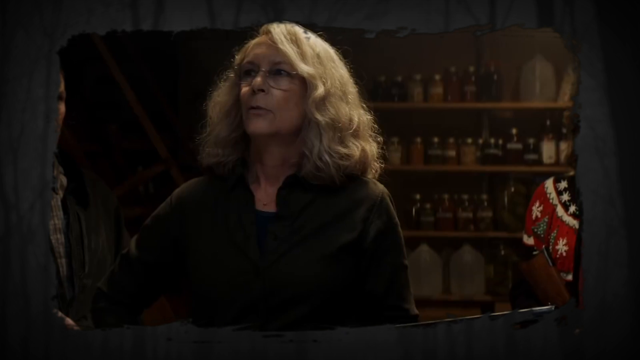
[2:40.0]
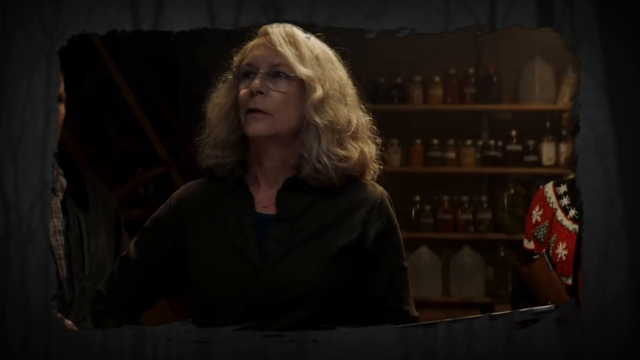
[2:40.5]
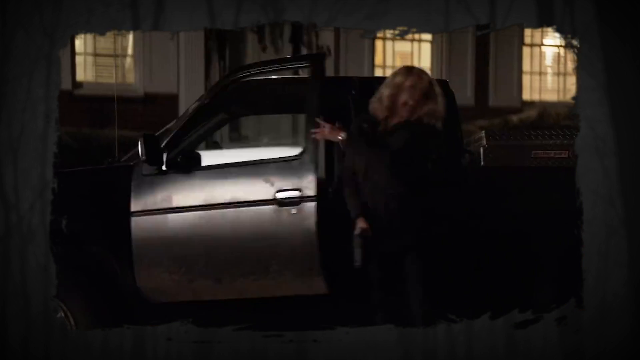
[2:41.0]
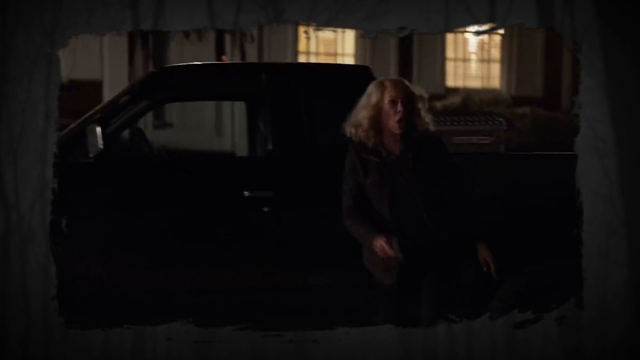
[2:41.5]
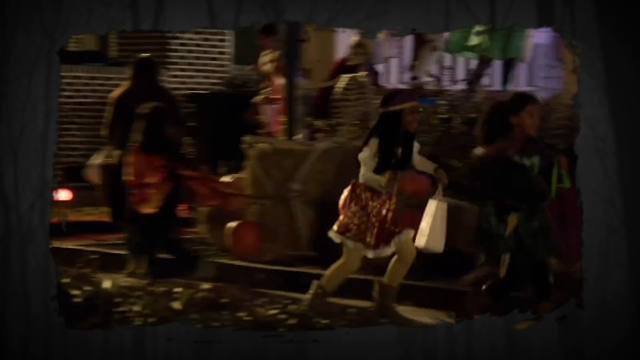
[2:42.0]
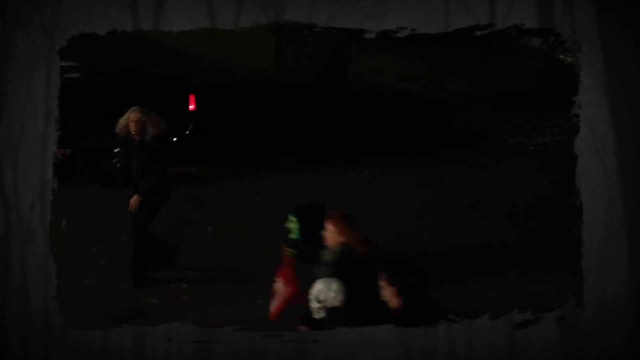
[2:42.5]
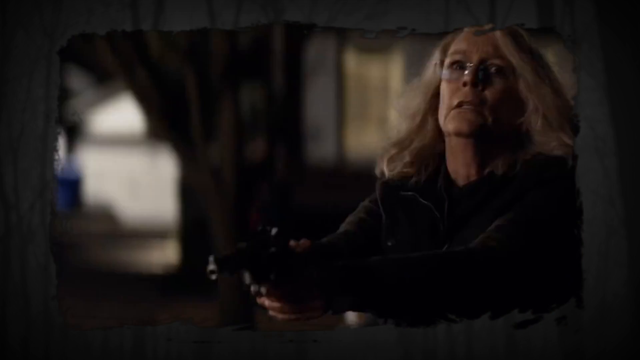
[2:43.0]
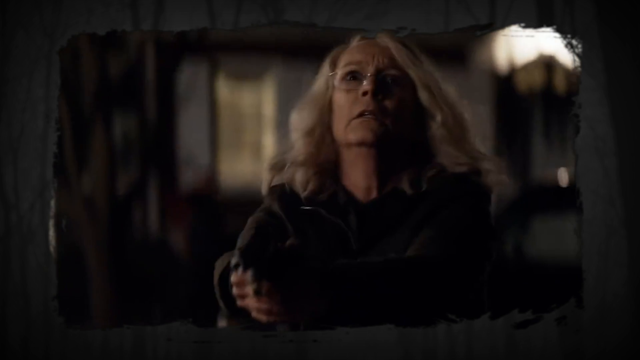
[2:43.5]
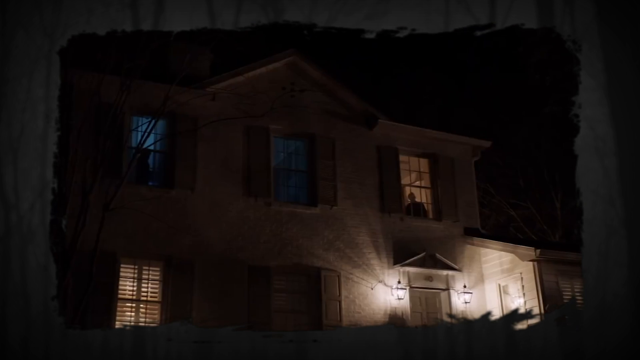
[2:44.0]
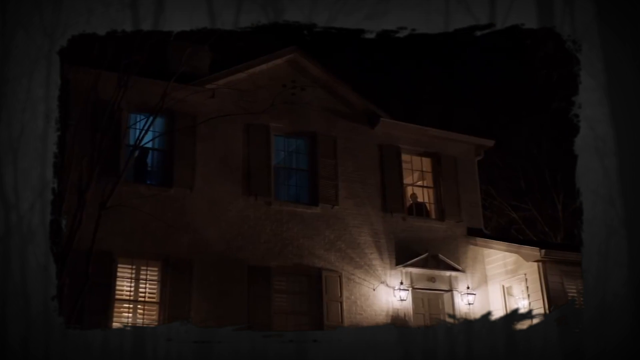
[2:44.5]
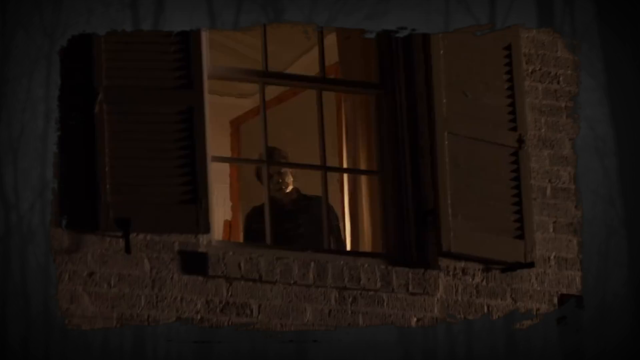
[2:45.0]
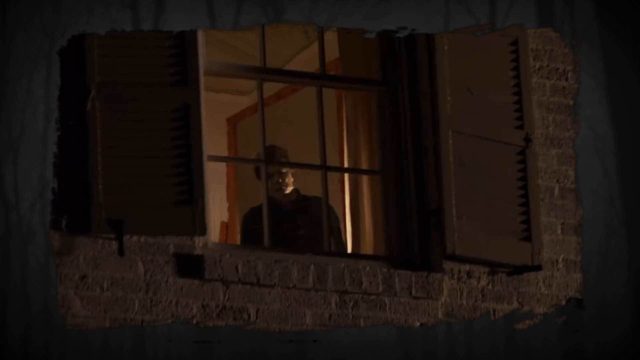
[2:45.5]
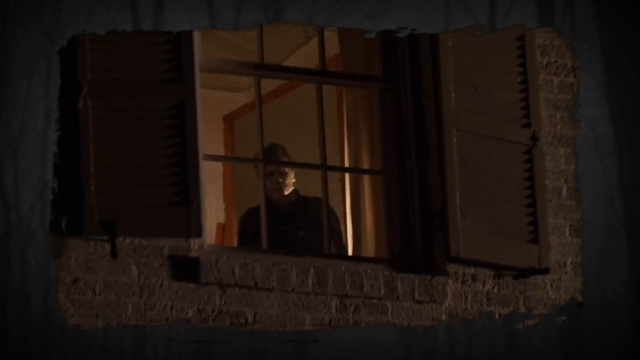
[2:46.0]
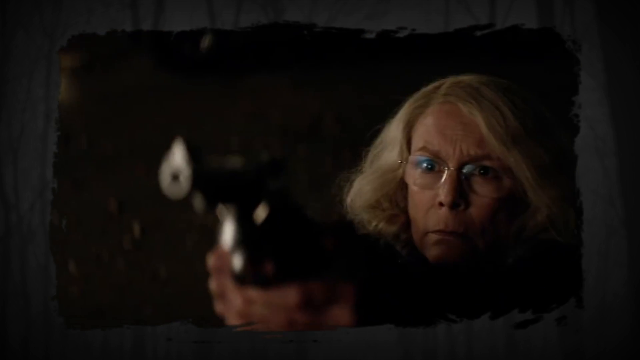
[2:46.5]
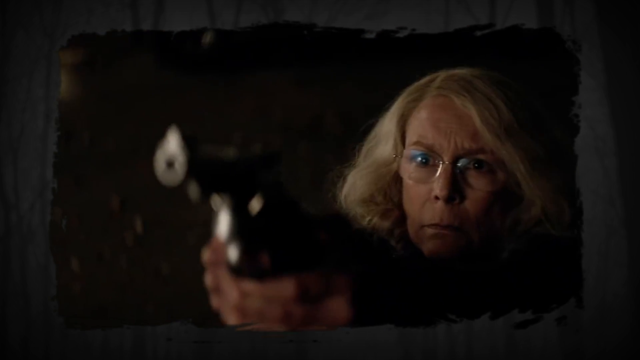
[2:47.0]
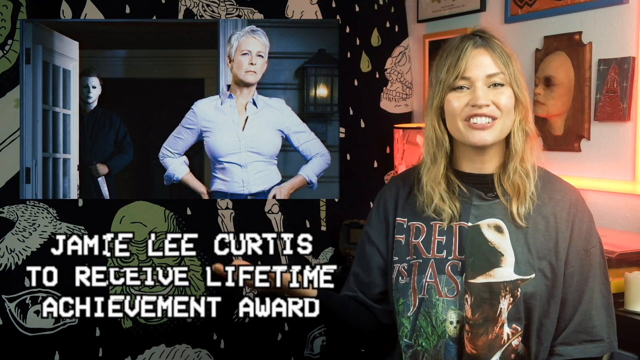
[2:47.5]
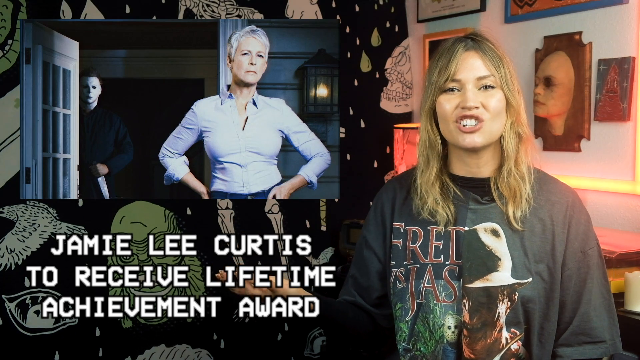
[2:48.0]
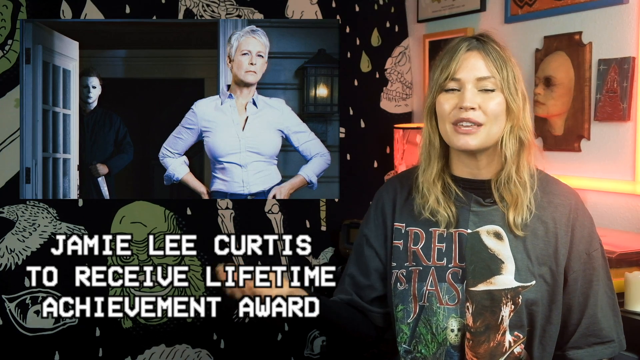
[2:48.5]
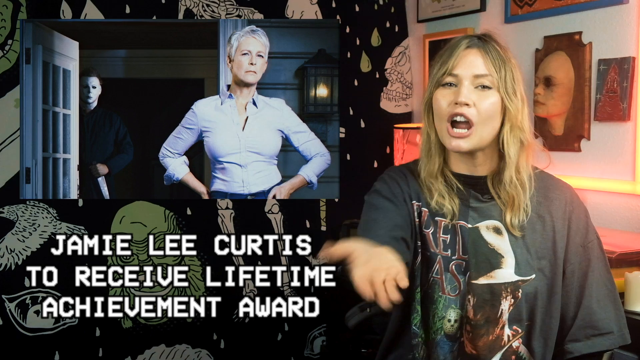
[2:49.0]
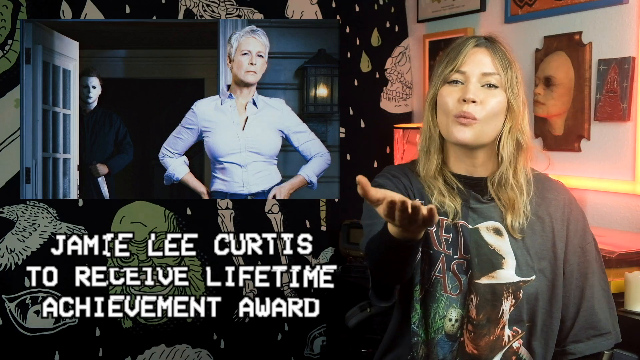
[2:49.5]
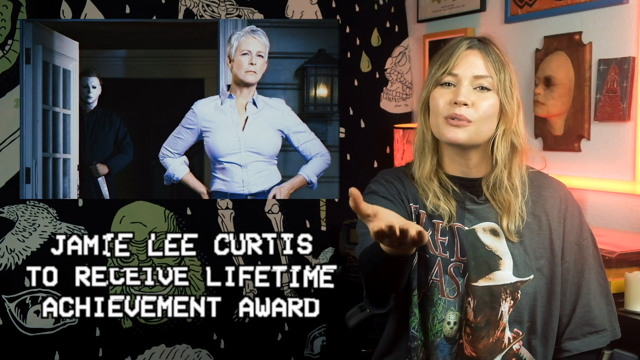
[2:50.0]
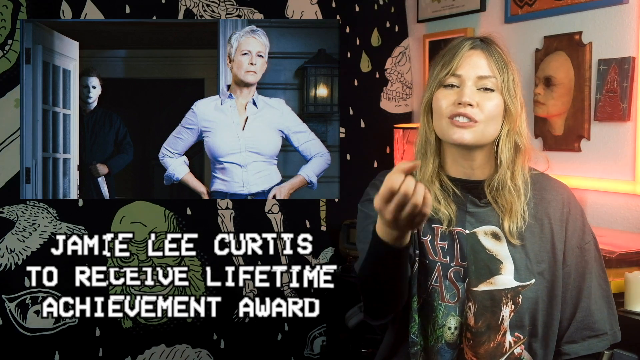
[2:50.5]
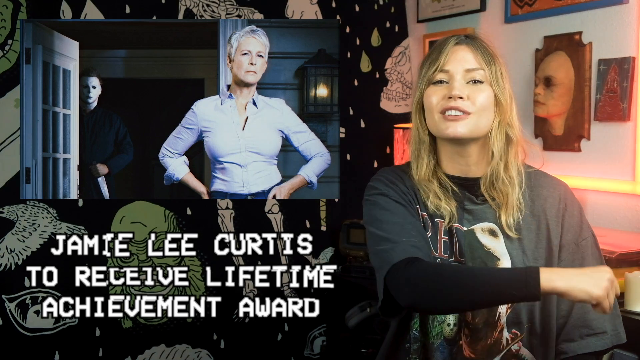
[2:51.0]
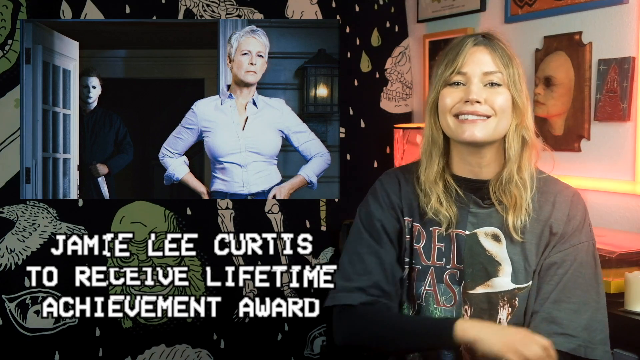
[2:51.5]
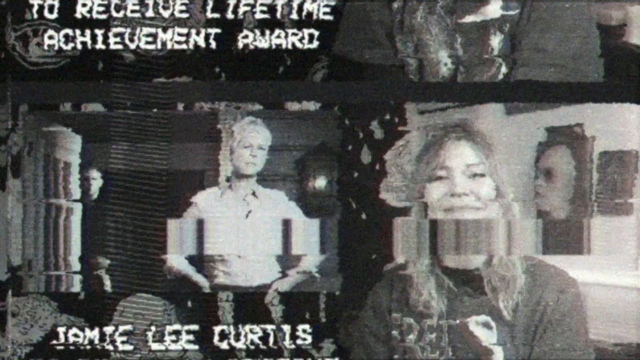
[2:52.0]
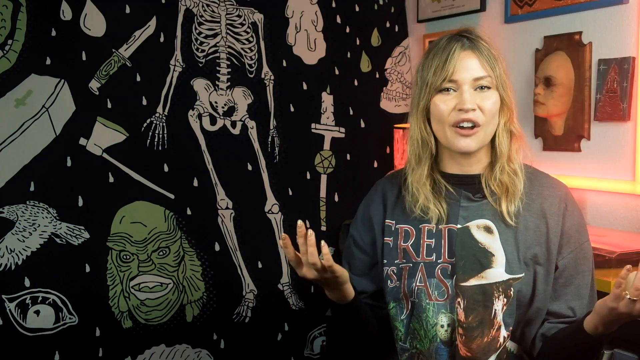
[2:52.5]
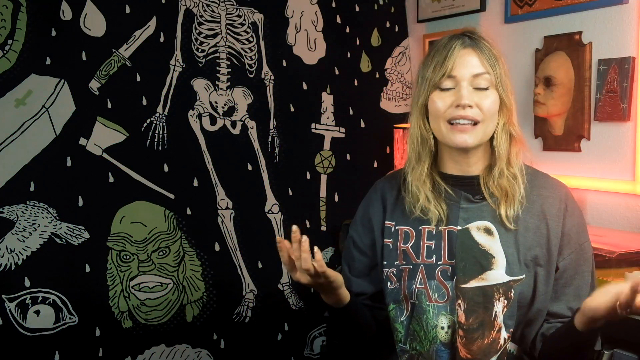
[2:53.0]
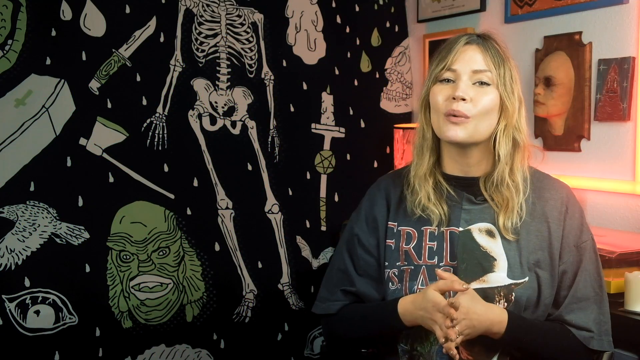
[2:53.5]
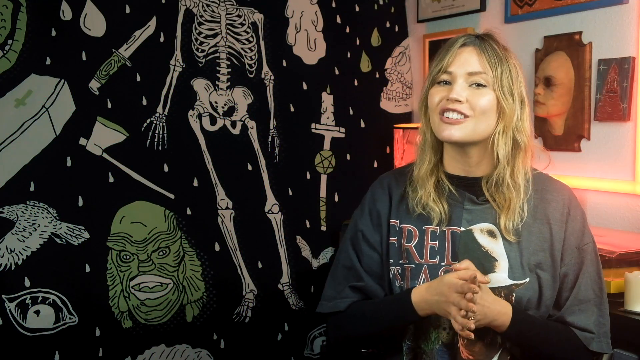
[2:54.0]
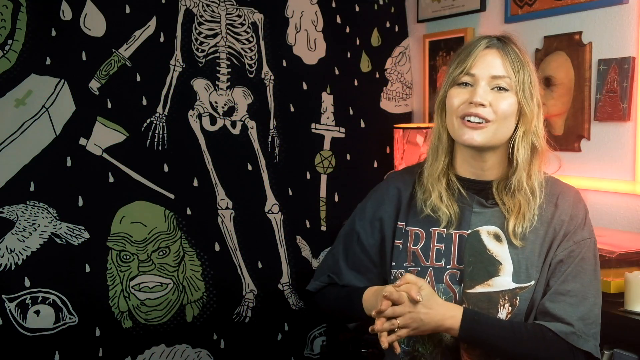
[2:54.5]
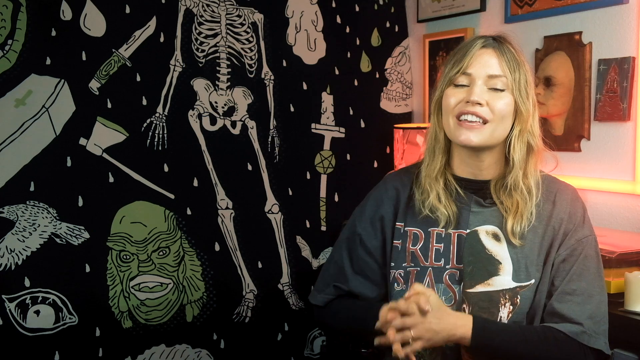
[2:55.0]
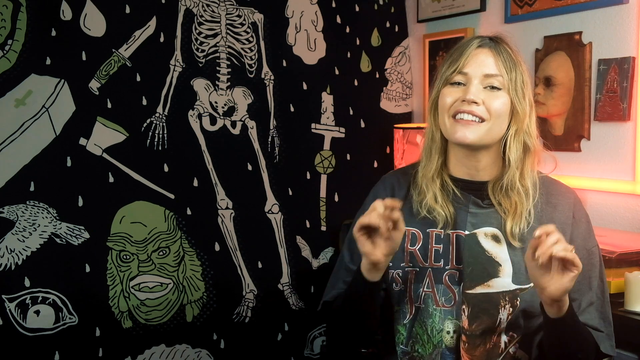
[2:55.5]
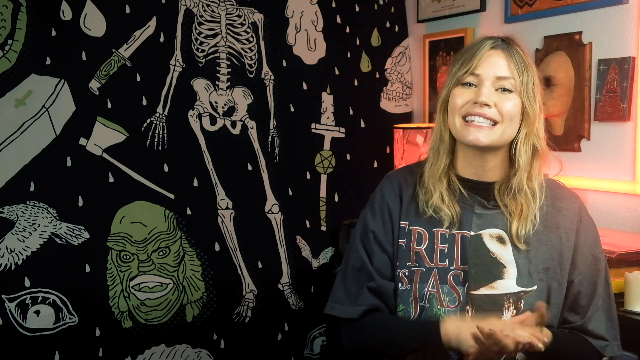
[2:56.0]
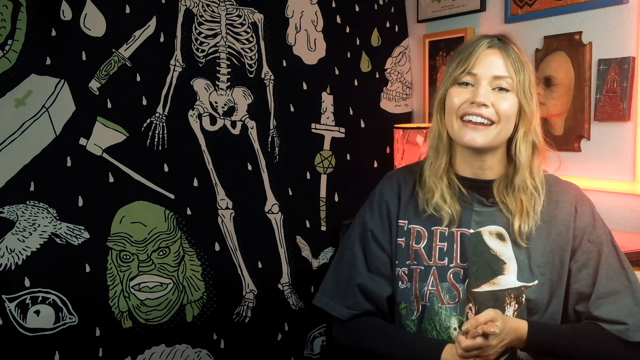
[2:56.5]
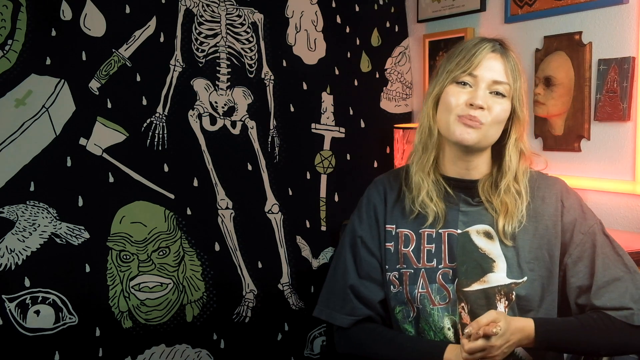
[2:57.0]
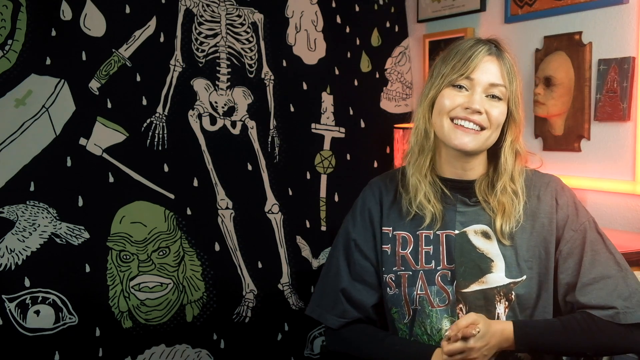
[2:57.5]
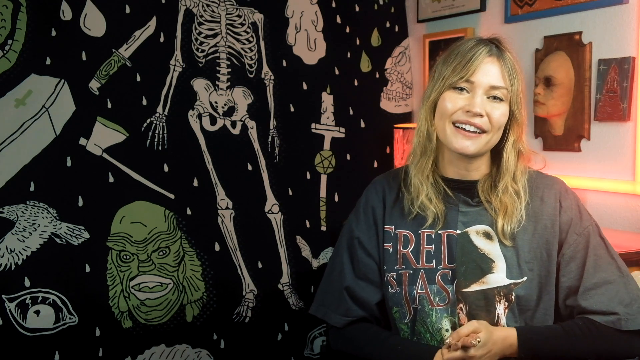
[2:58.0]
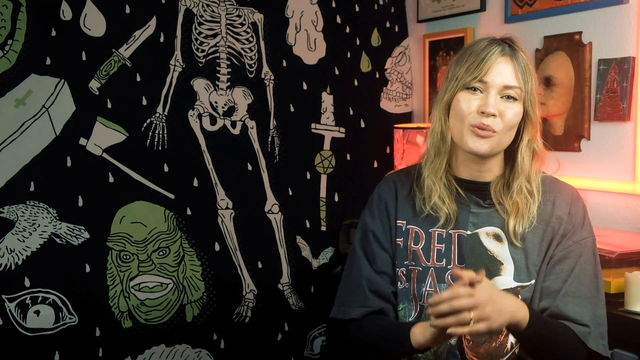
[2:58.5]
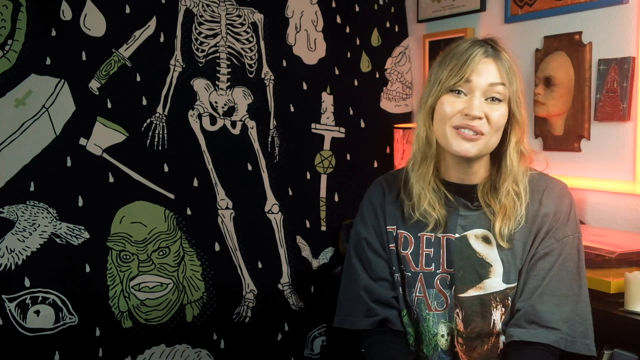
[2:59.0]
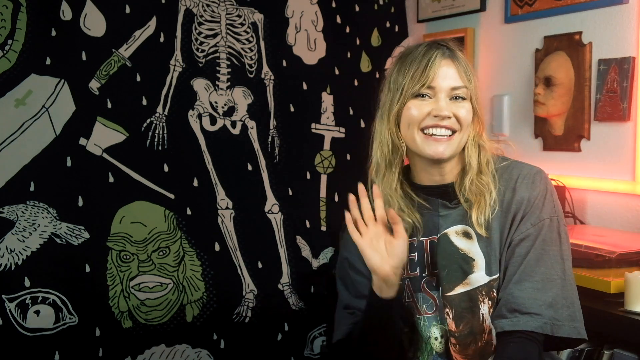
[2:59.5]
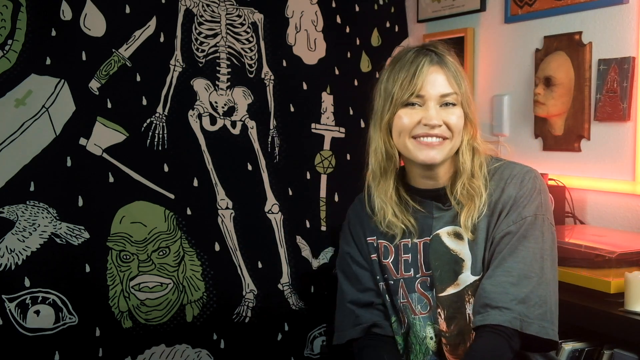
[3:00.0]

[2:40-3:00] In the movie scene, Jamie holds a gun while kids move all around for safety, and the bad guy is facing or looking at Jamie from the flat, facing down below. Jamie looks ready to fight. Whitney then appears again, and her Twitter handle is placed on the screen.